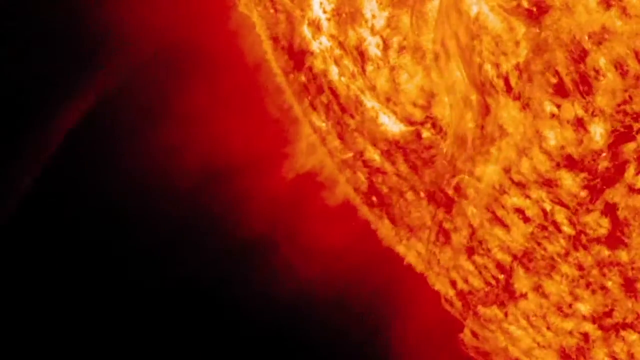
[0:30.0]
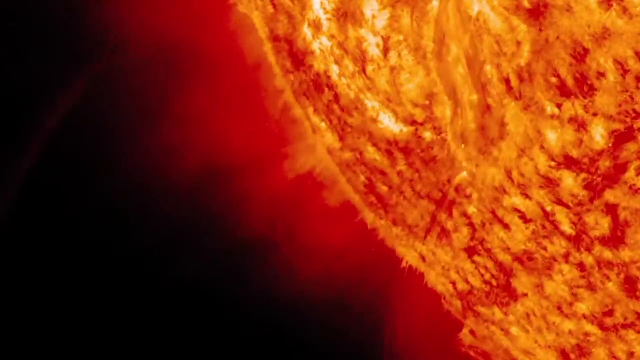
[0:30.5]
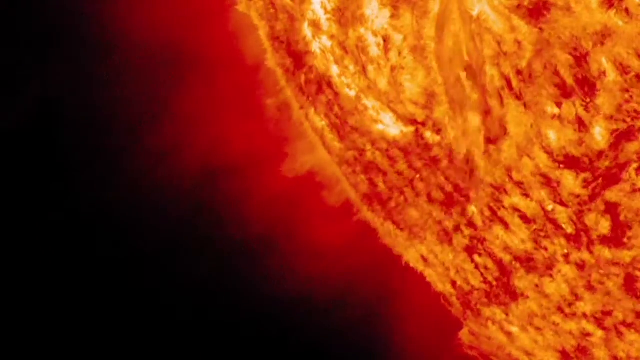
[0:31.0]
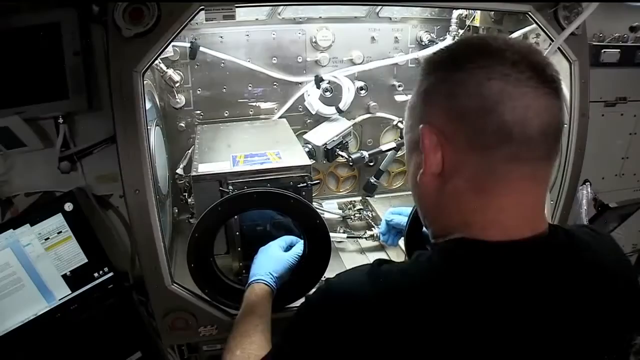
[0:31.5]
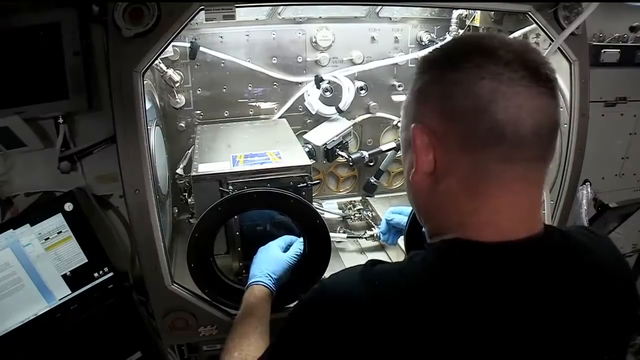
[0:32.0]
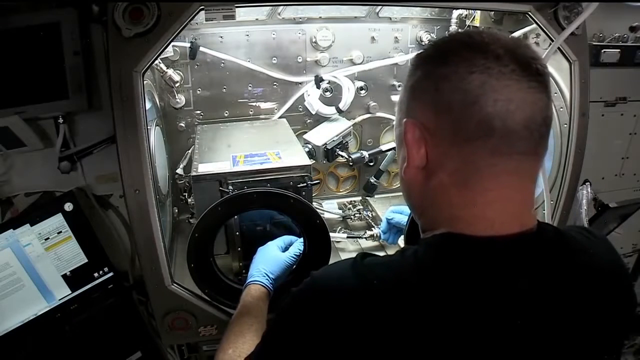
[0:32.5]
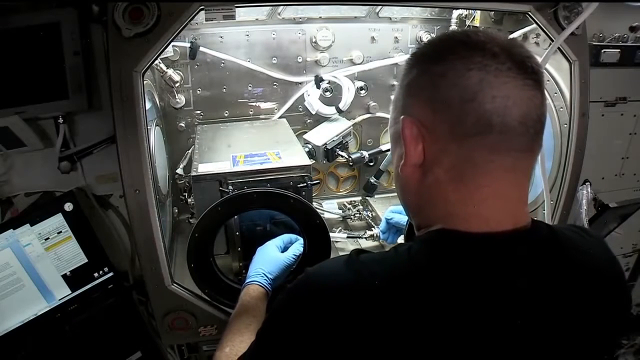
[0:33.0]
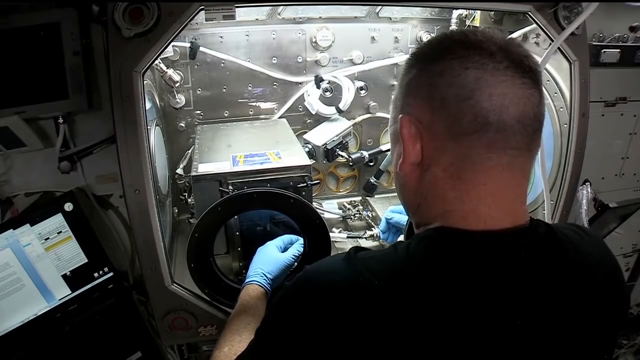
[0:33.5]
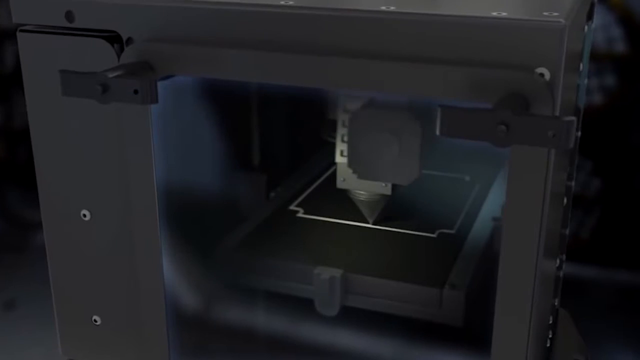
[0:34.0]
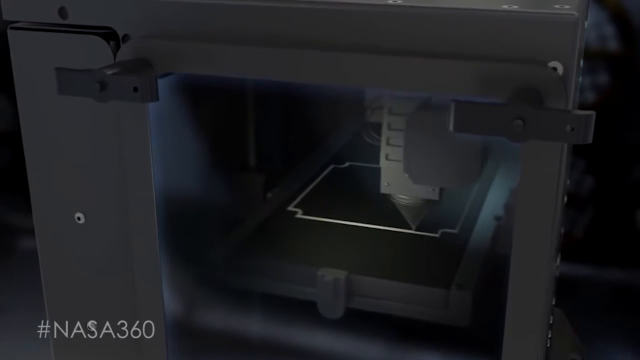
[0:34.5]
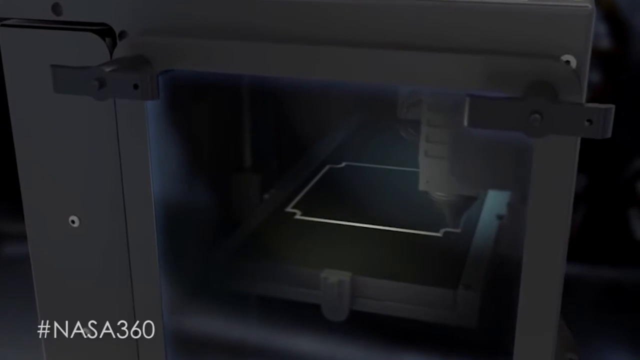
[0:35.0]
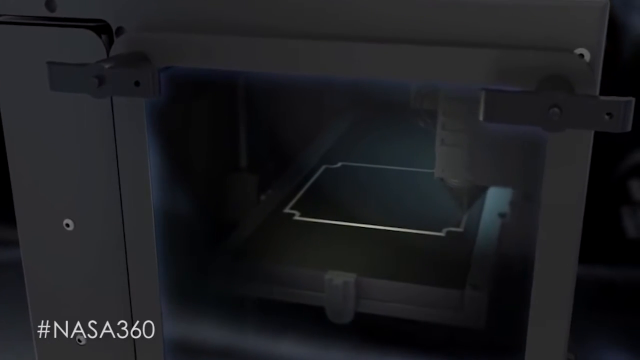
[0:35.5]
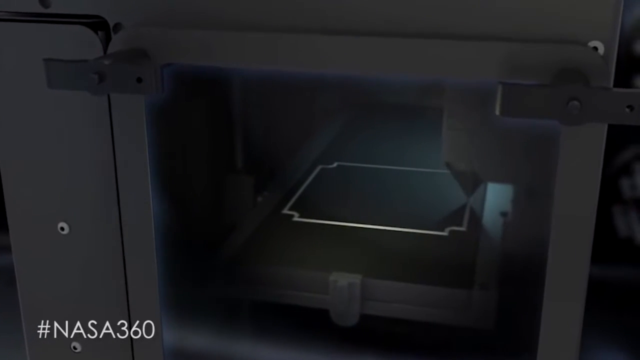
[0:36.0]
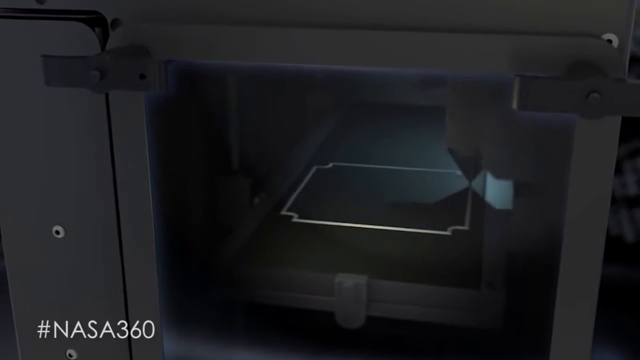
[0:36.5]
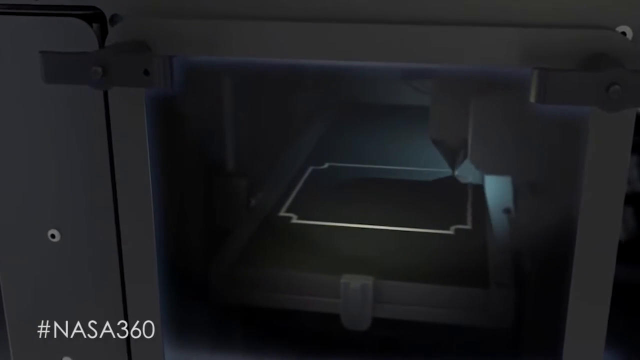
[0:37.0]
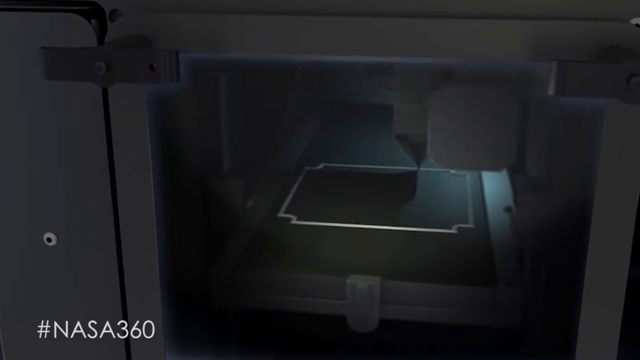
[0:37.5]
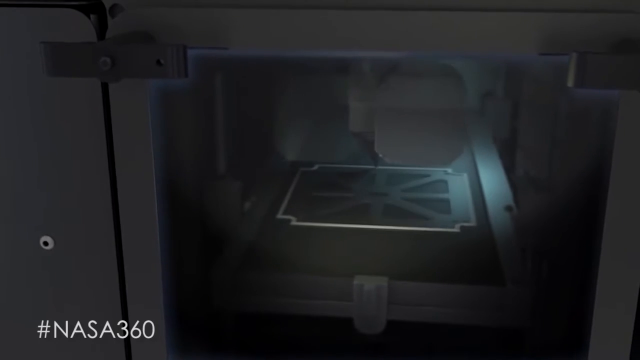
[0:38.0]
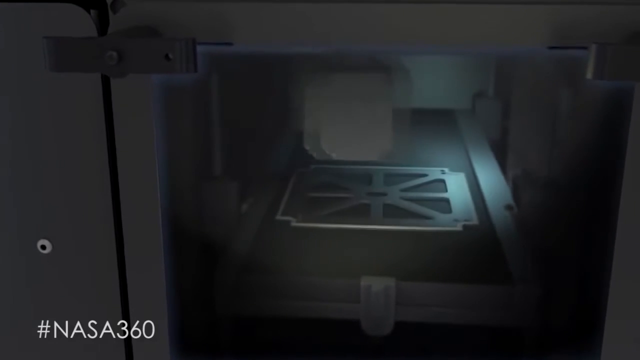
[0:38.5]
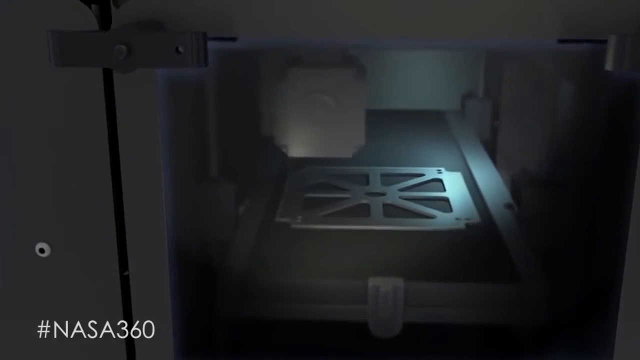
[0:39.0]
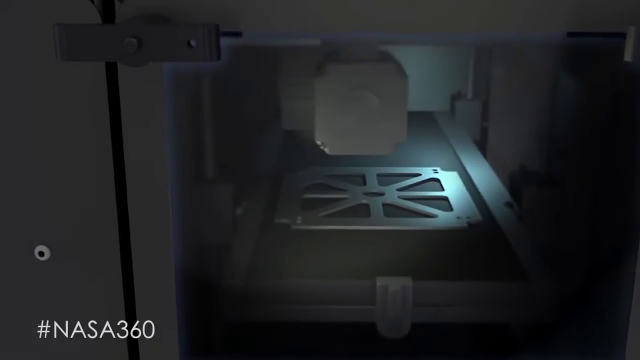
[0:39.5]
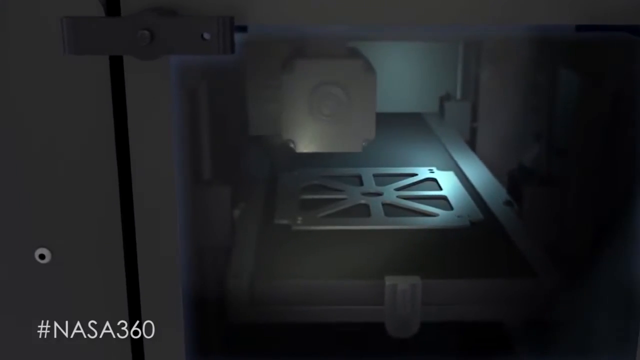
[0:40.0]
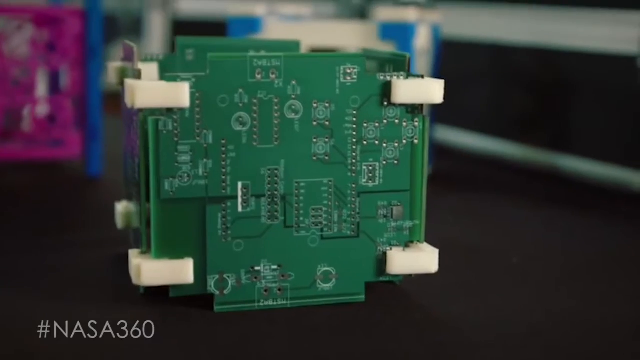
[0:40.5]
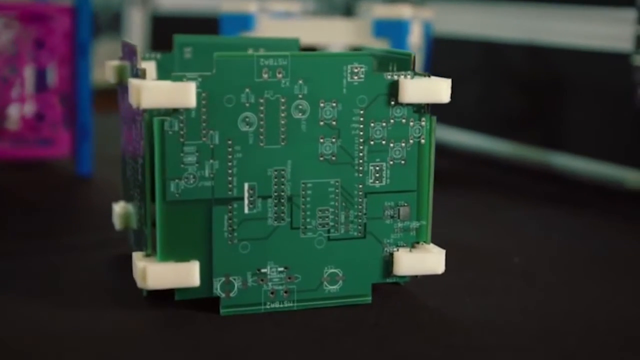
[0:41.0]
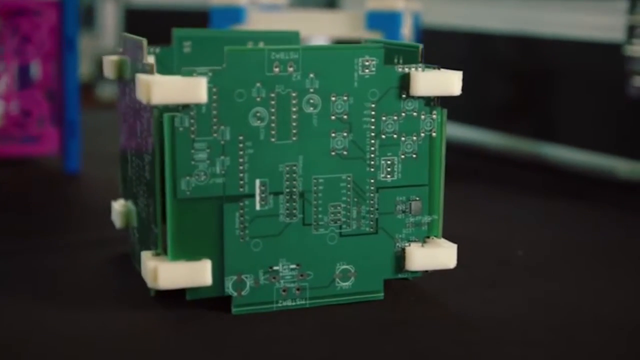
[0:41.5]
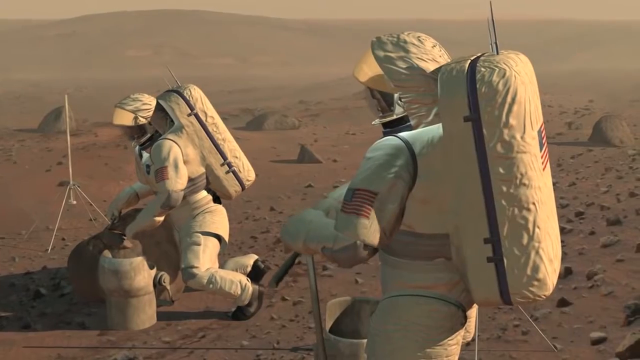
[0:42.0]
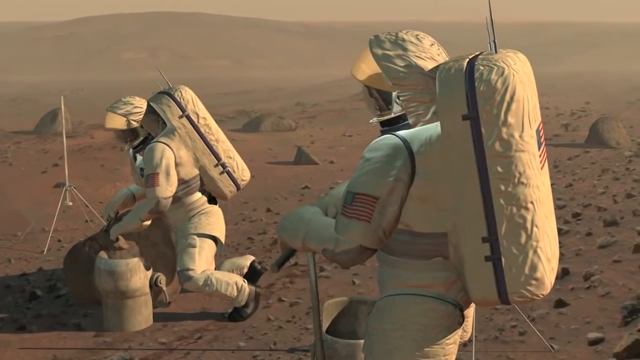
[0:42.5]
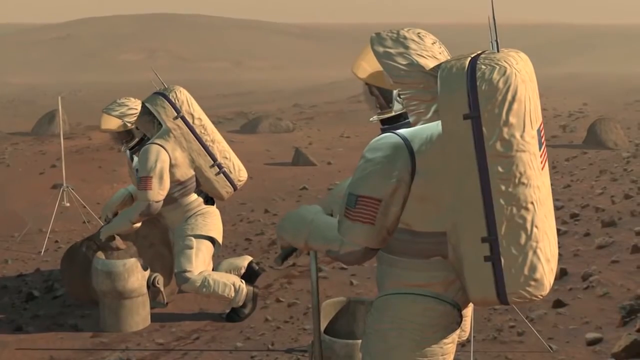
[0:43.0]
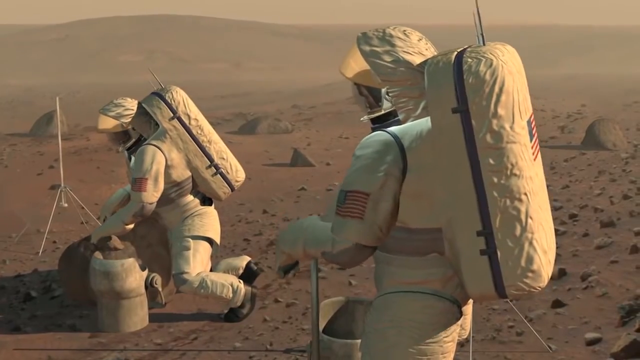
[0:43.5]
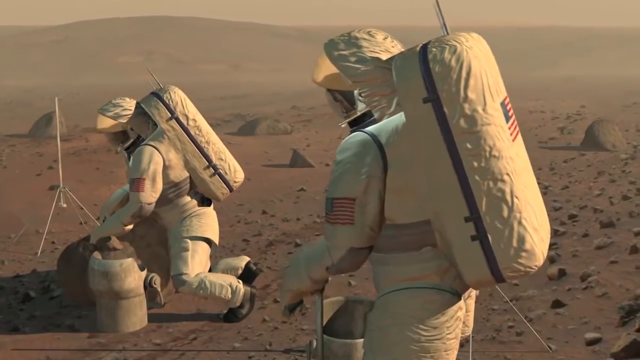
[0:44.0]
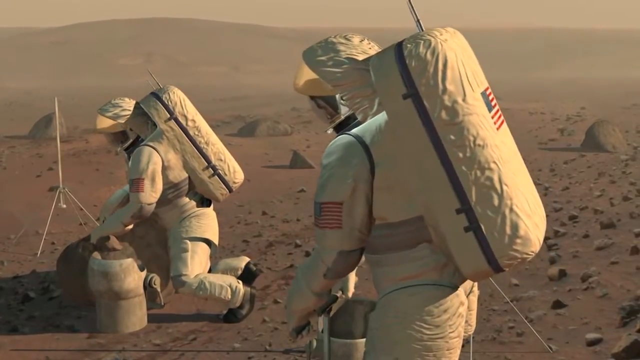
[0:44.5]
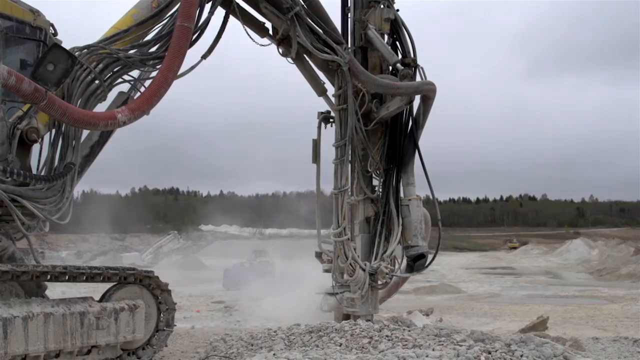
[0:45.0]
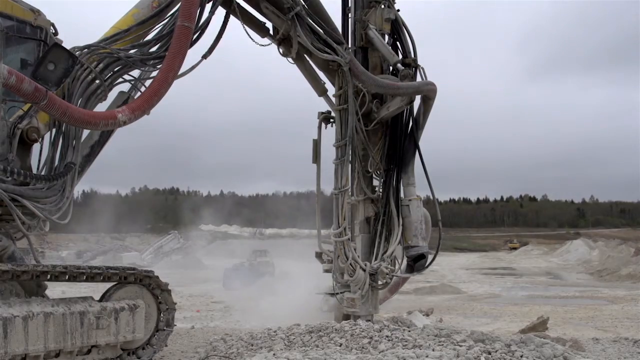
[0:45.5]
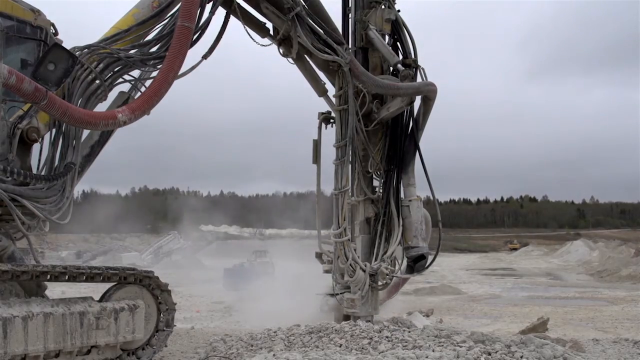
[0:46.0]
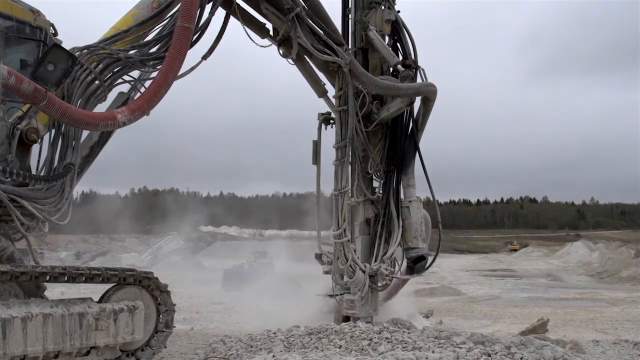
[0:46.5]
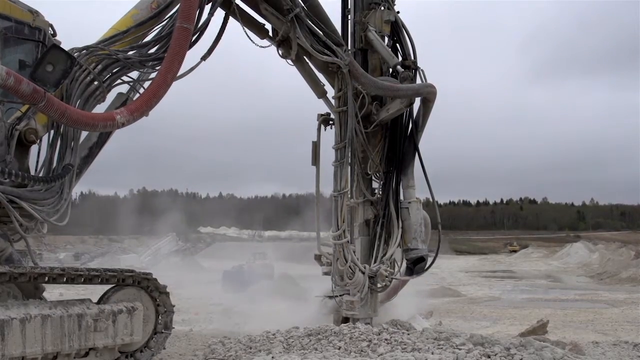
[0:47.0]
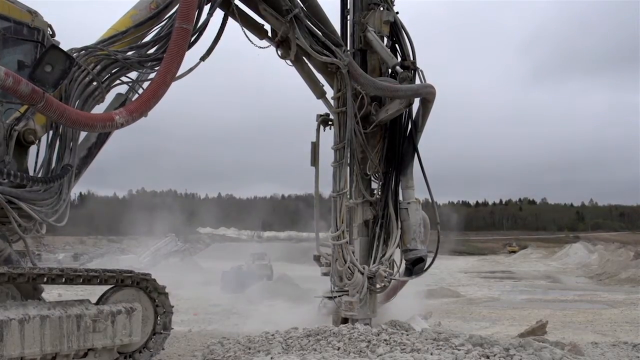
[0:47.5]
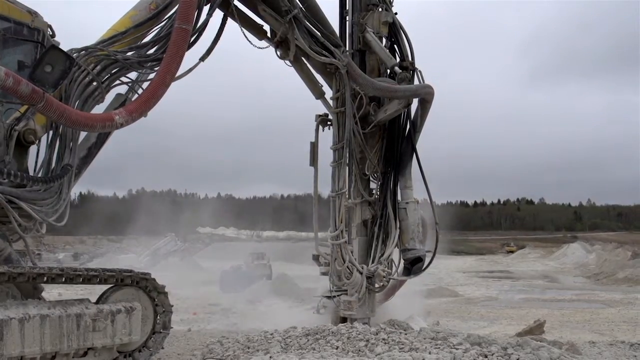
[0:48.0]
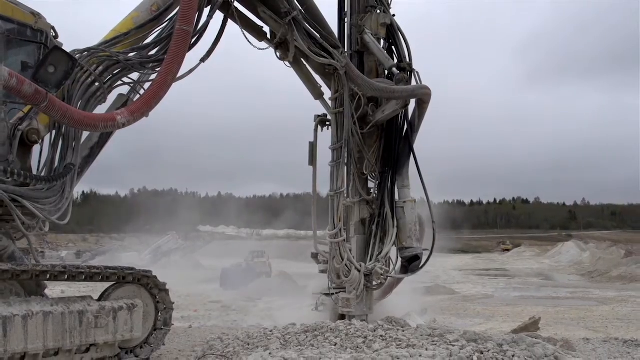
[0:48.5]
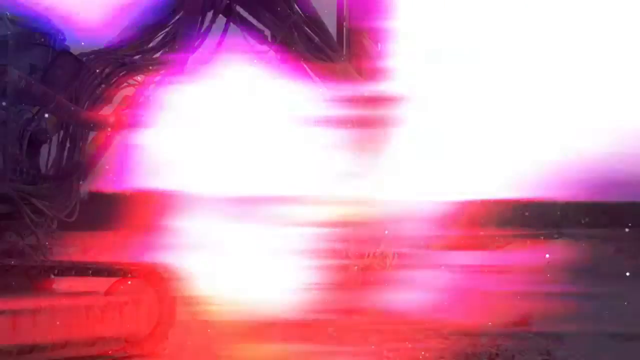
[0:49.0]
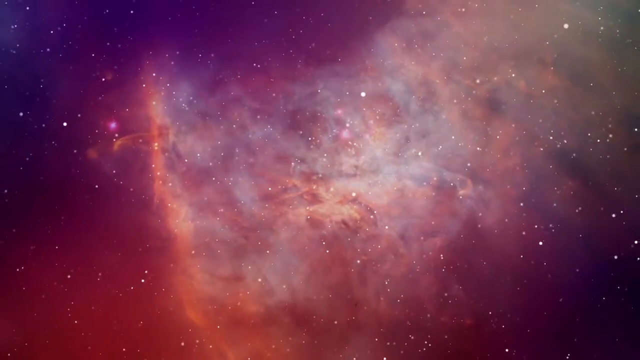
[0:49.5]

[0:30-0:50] A large mass of orange fire, presumably the sun, is on the right side of the screen, with a large orange haze coming off its surface, rippling with dark orange coloring. The video cuts to a real astronaut inside some kind of space station using a science hutch that you put your arms through. Both his arms are through the hole on the side, and his hands are covered in blue latex gloves. He floats there, looking at what seems to be some kind of printer. The footage cuts to a 3D render of a 3D printer slowly printing a box-like structure inside it; it then slowly fades forward in time, showing that the structure is a flat piece of metal with multiple ridges. Next, a real-life videotape shows a box made of various large green microchips held together by white clips, and the shot slowly pans to the left. The footage then cuts to a 3D render of two astronauts on a grayish-red planet who seem to be assembling equipment in front of them; the one on the left is filling a bag, and the one on the right is using a large rod to push to the ground. Finally, on Earth, a real-life drill on a large tractored cabin digs in front of it, causing a large white cloud to appear around the drill.